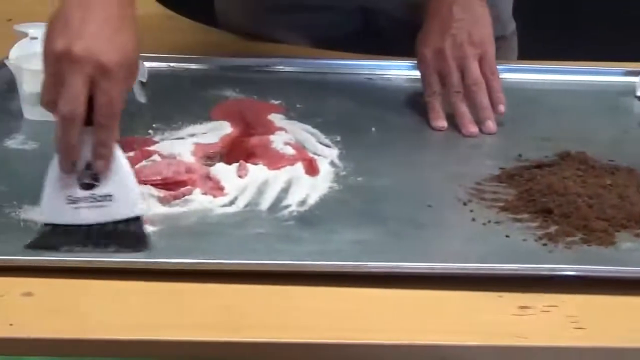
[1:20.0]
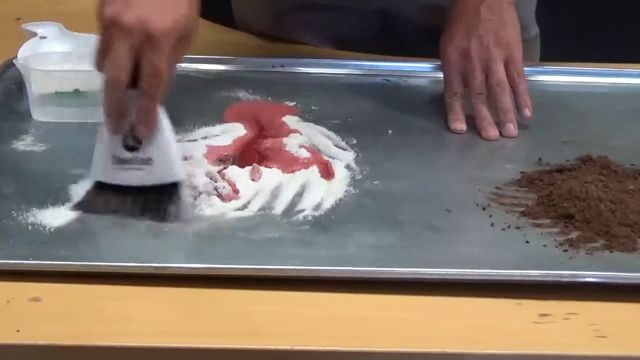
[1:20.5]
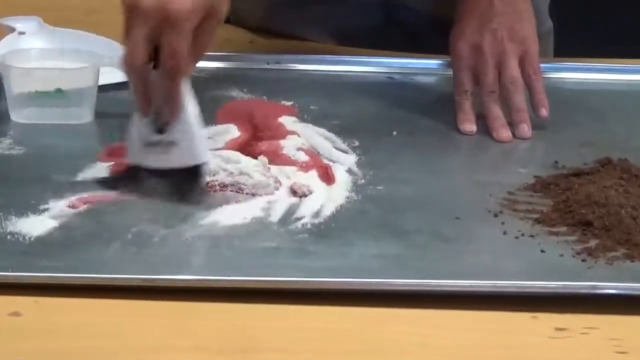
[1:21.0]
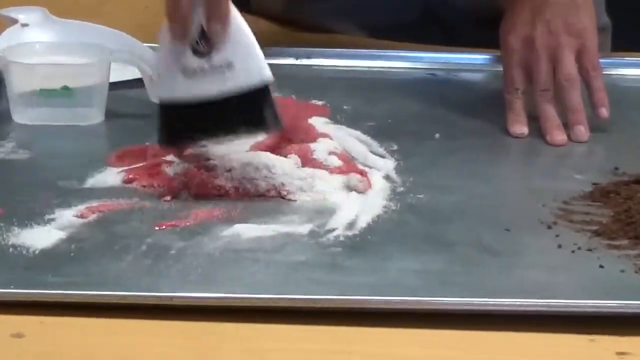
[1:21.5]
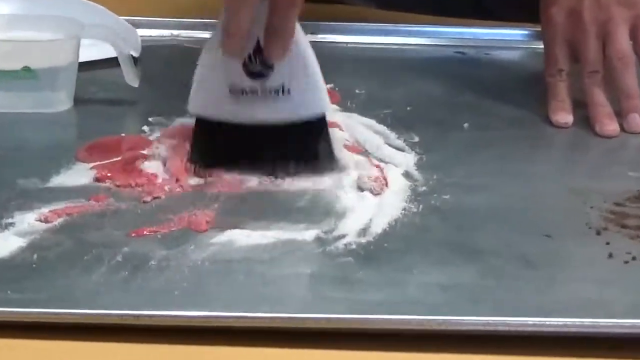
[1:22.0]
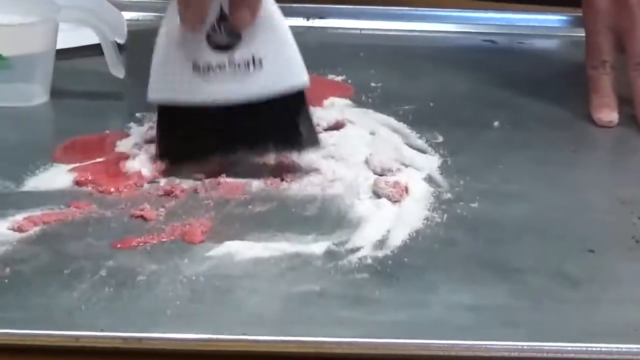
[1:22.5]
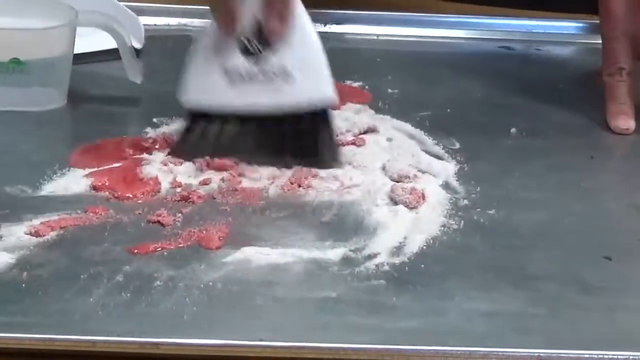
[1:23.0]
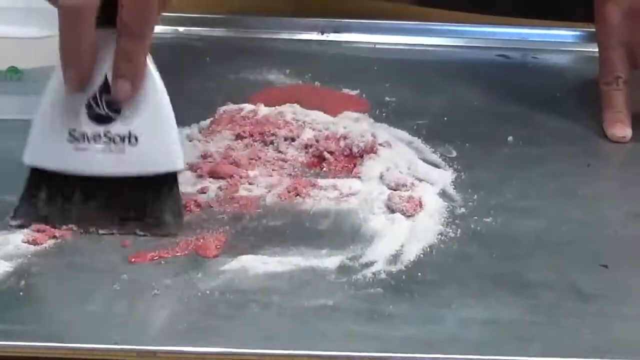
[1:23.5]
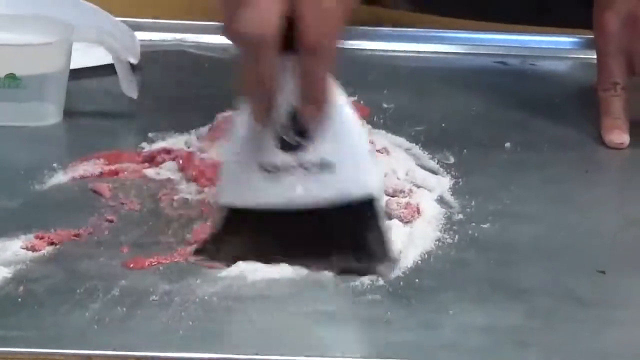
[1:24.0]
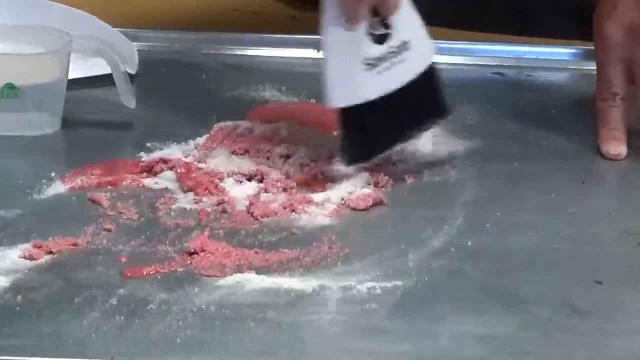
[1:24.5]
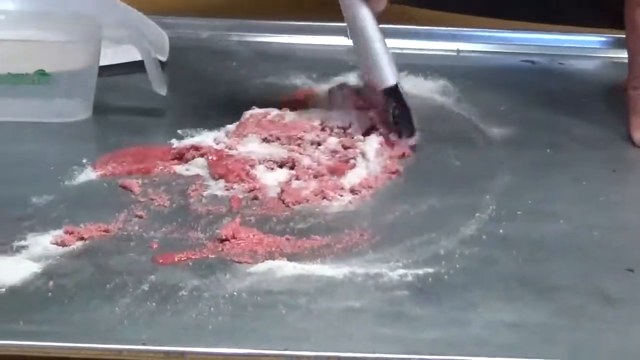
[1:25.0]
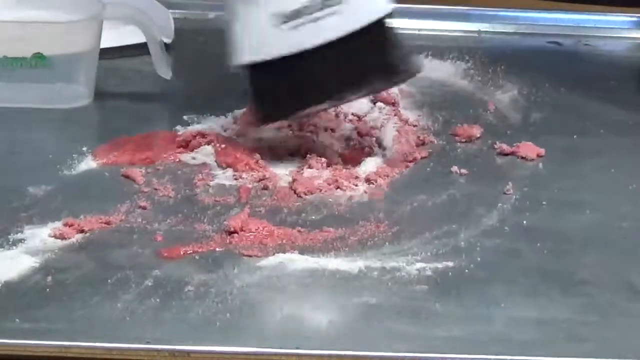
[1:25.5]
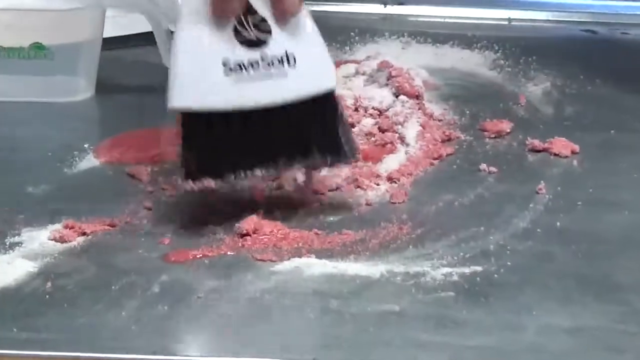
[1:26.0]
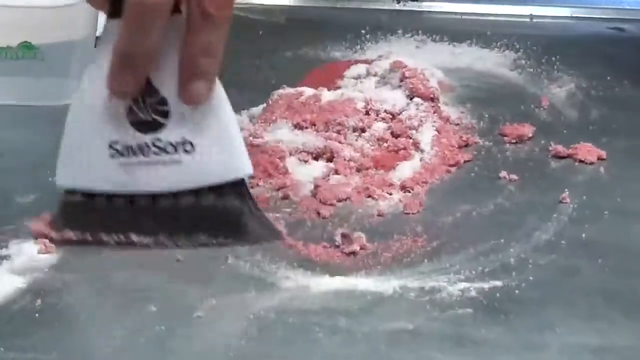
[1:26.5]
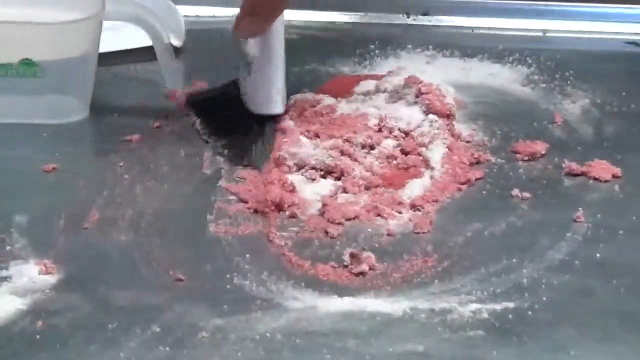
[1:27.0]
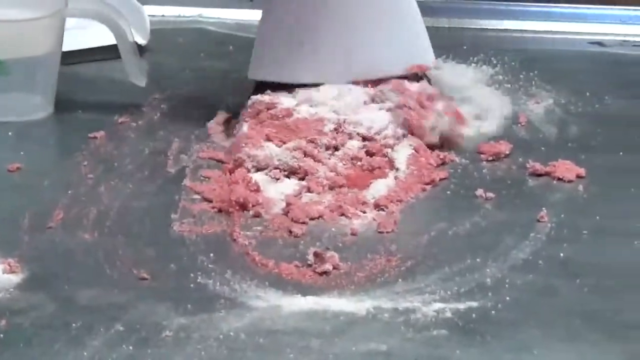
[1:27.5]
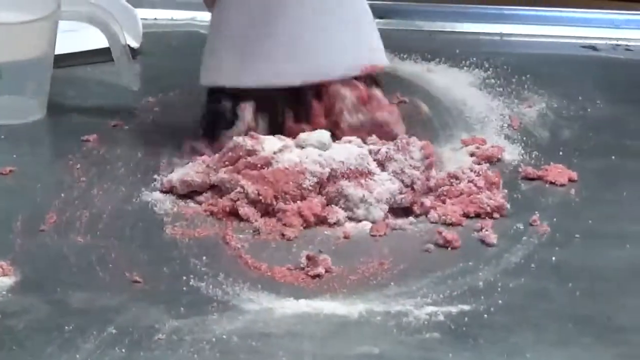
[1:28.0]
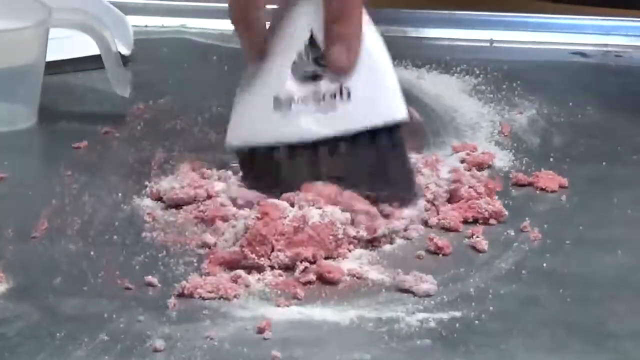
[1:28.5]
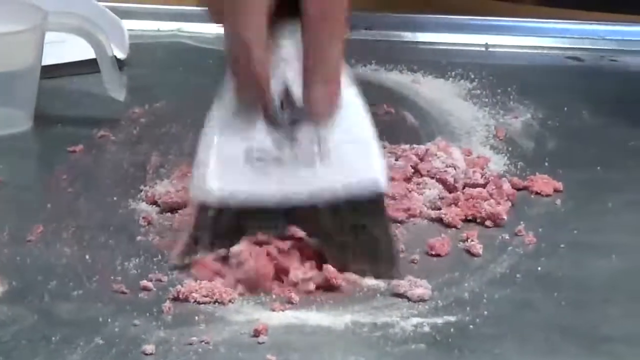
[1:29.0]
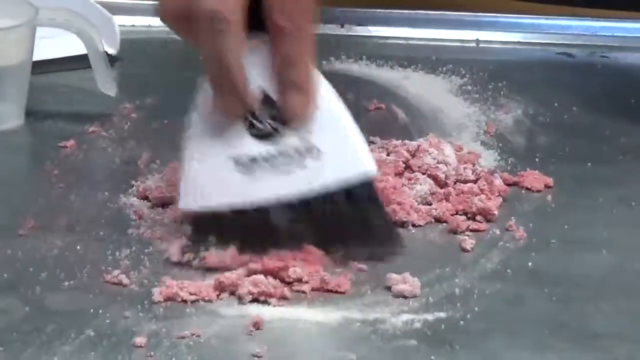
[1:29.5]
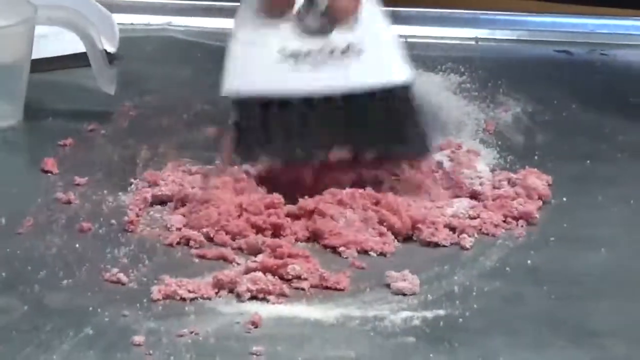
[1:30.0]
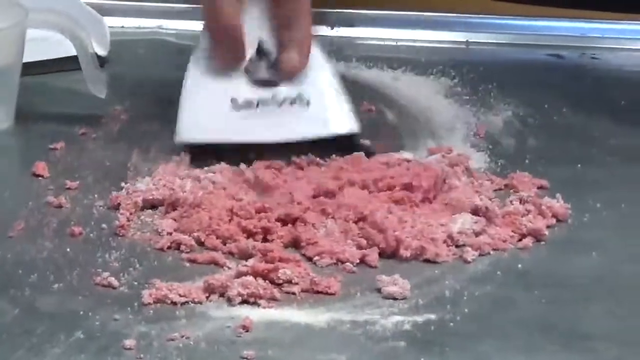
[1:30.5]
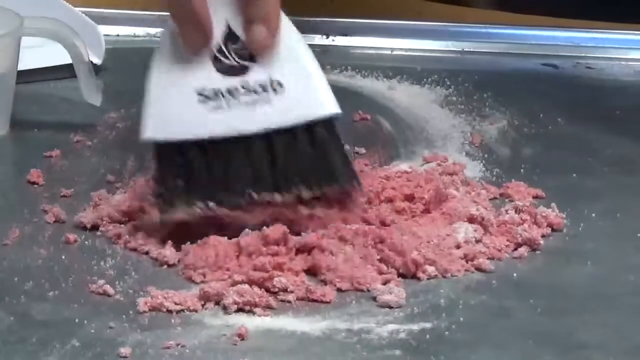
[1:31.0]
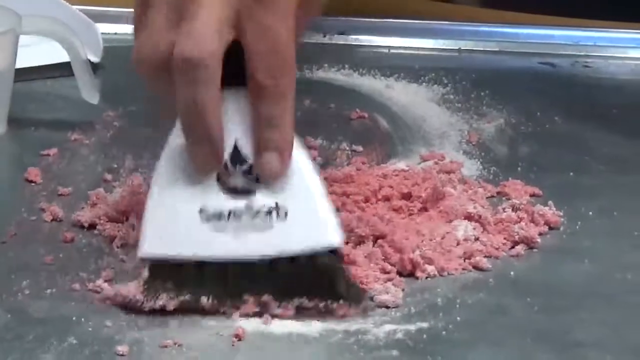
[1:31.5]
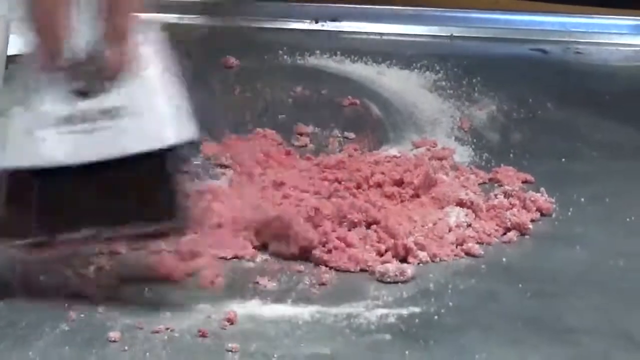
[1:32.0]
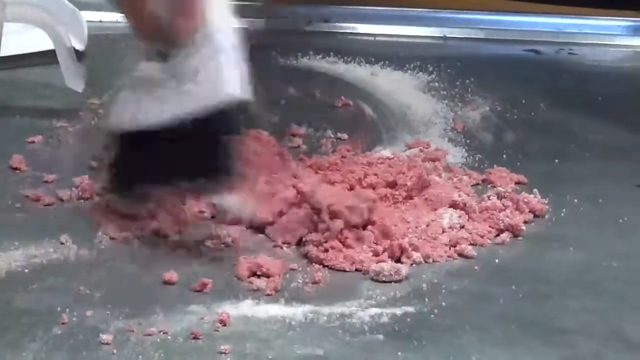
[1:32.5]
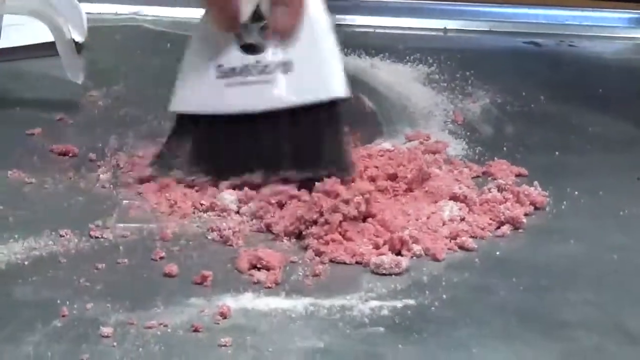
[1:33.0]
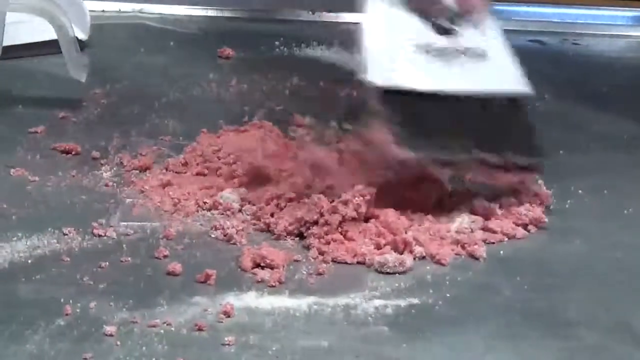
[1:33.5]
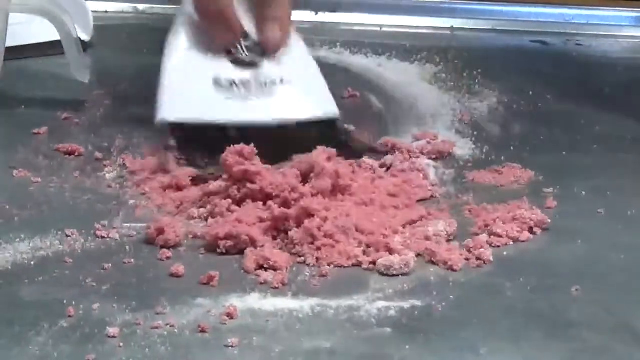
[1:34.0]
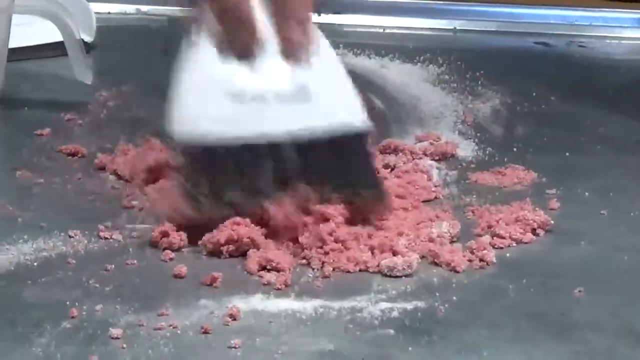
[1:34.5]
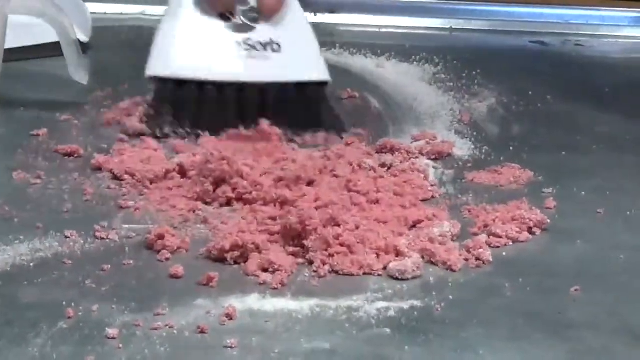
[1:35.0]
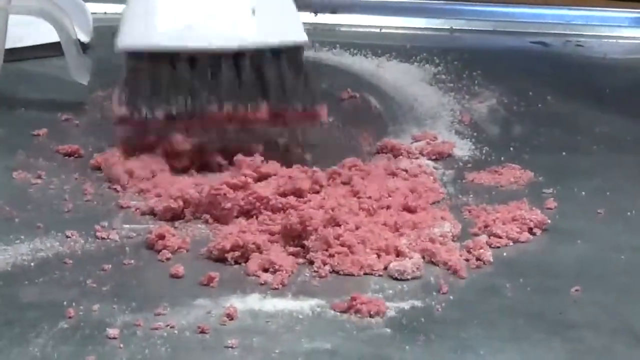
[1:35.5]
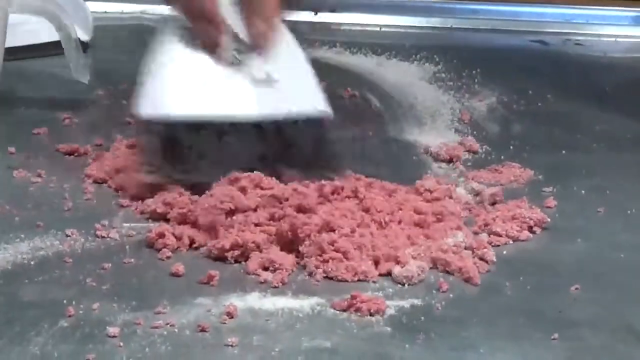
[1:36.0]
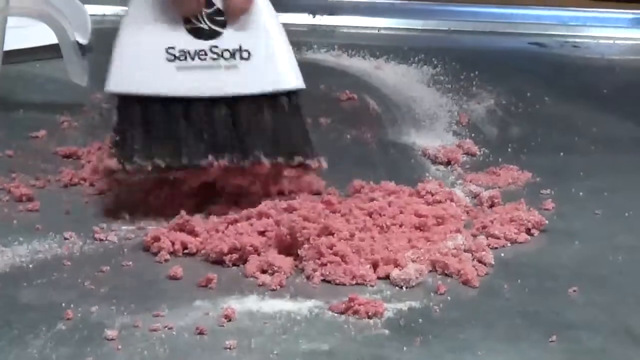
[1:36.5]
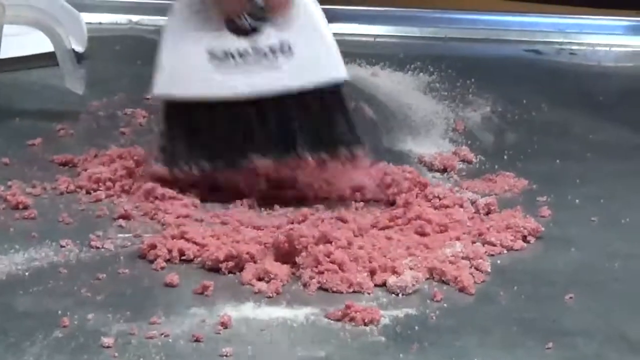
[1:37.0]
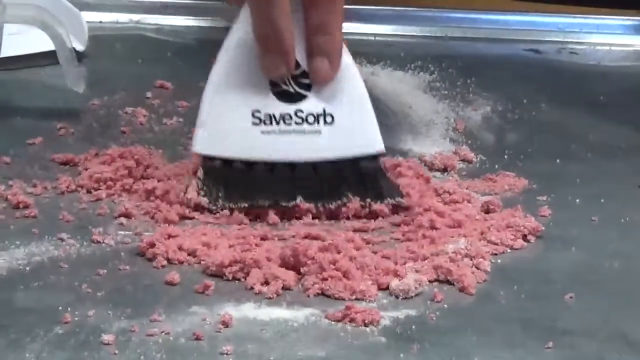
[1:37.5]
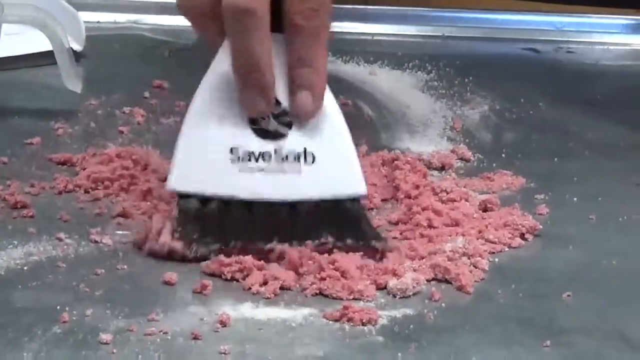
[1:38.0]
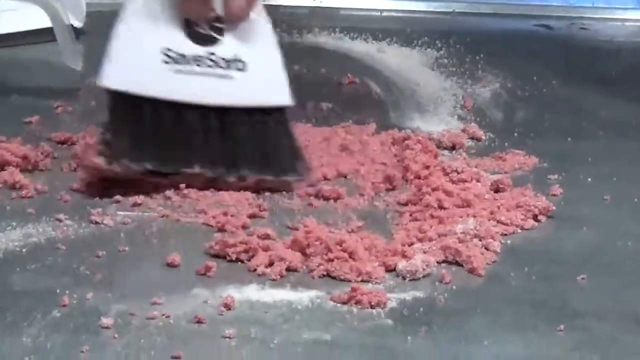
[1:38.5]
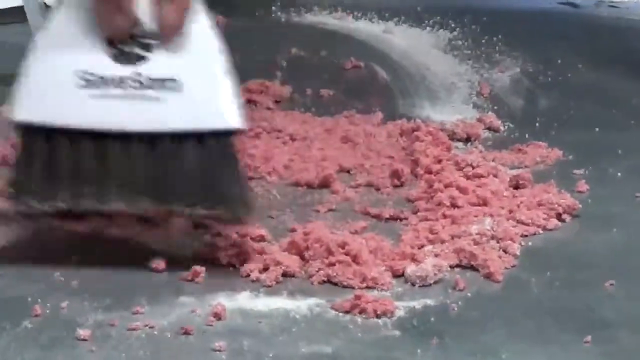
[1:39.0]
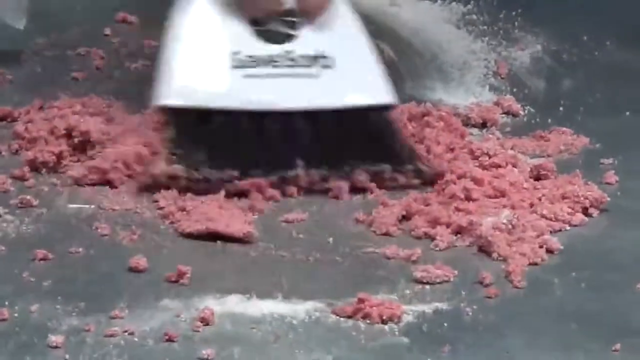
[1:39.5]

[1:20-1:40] The brush bears the SaveSorb logo in black text; it has a white body with brown or black bristles and handle. The man keeps brushing everything together, mixing the liquid and the product into one while making everything tidy. This forms lumps of reddish pink product that seems to have fully absorbed the red liquid. He holds the pan with his other hand for stability so it does not fall while he mixes. Everything is on a brown table and on the silver tray, and the cups he used to pour the liquid are at the back of his hand, beside the pink product.